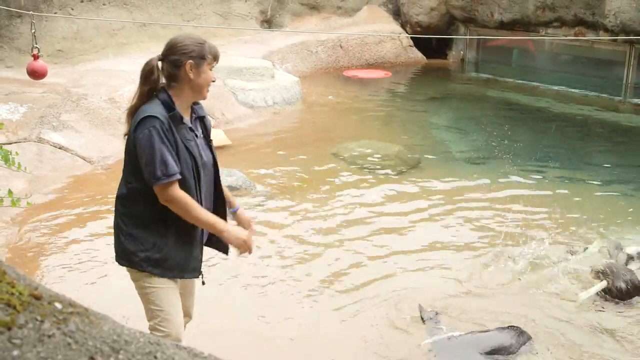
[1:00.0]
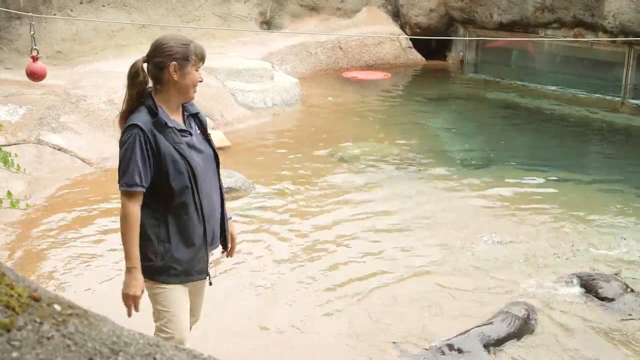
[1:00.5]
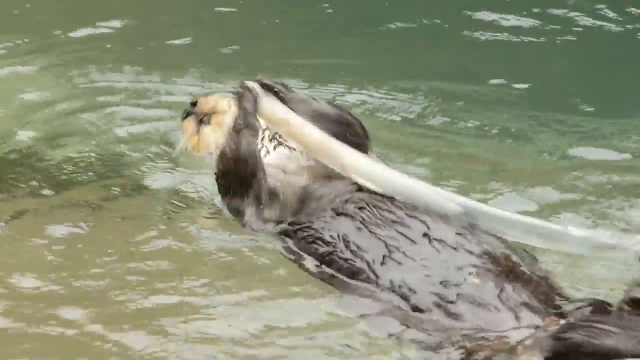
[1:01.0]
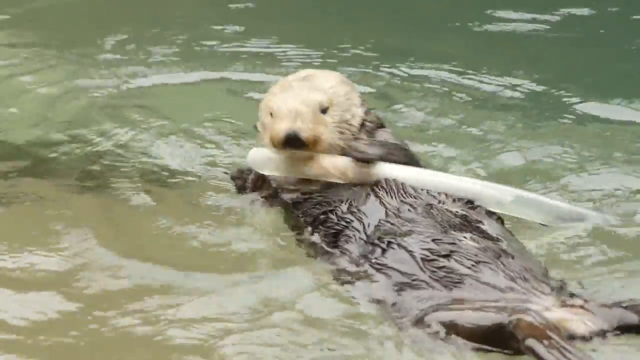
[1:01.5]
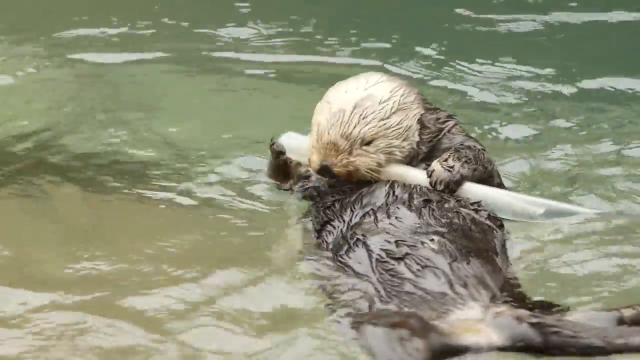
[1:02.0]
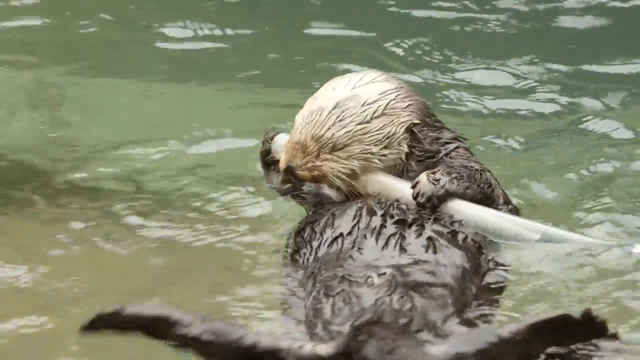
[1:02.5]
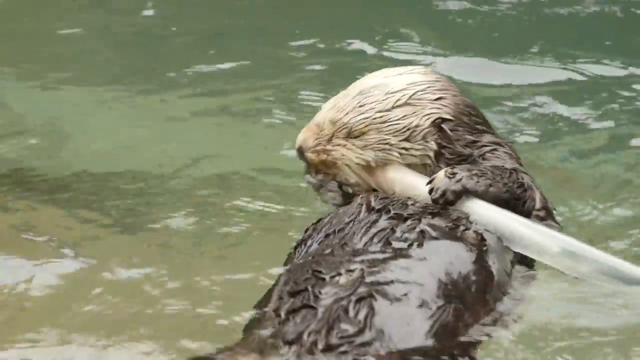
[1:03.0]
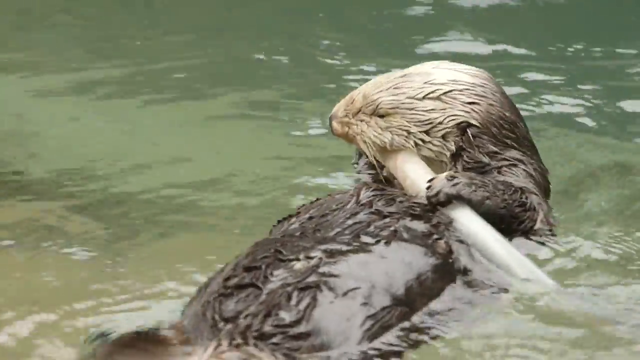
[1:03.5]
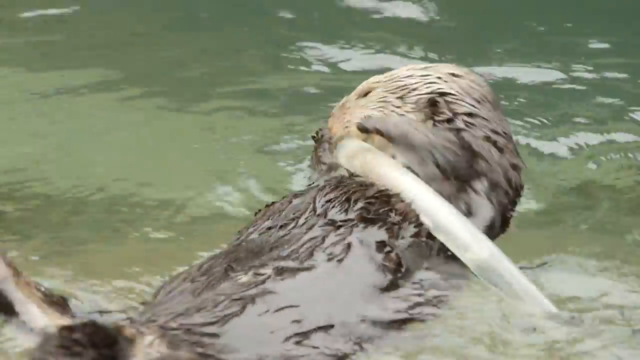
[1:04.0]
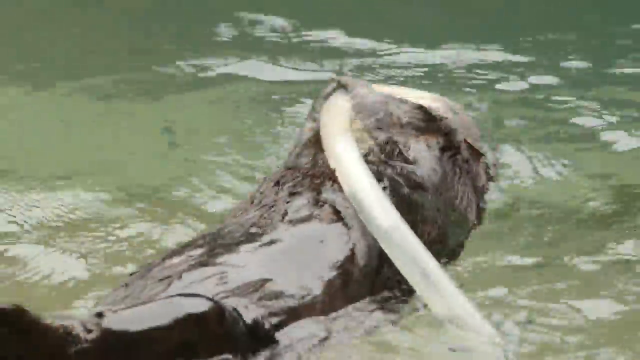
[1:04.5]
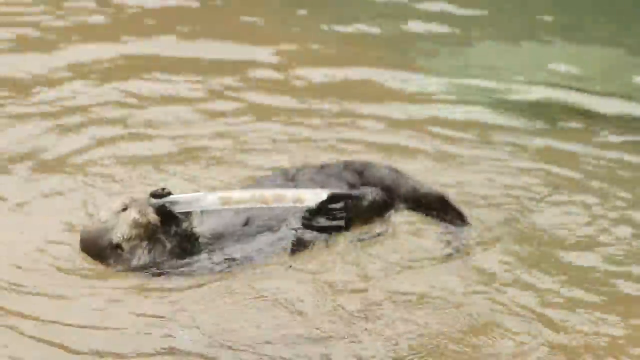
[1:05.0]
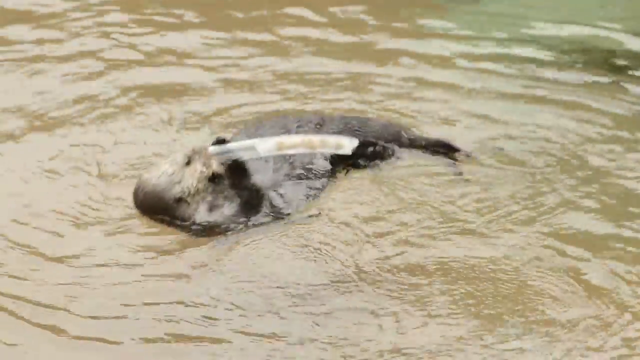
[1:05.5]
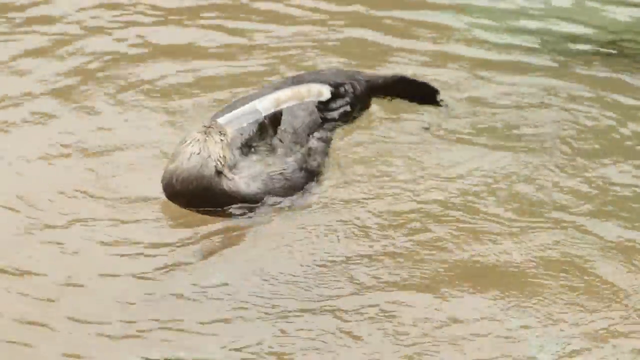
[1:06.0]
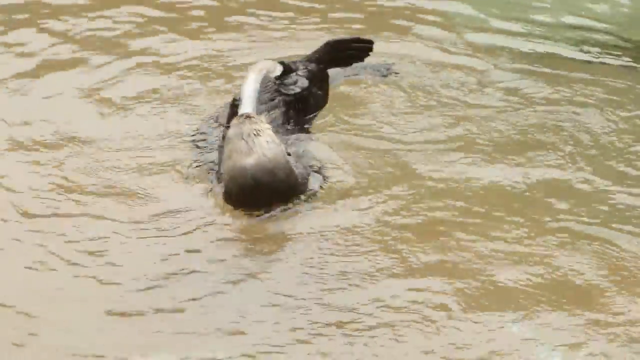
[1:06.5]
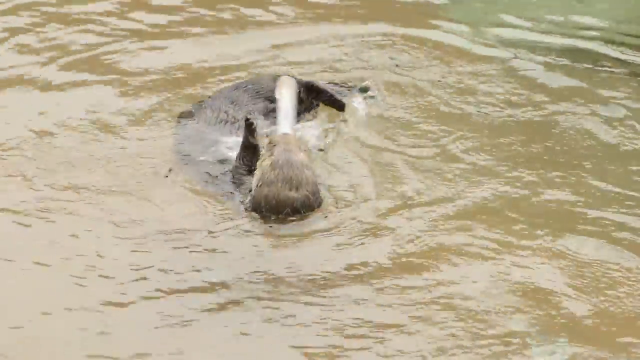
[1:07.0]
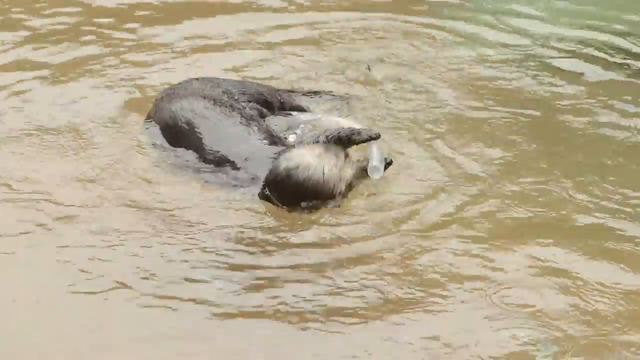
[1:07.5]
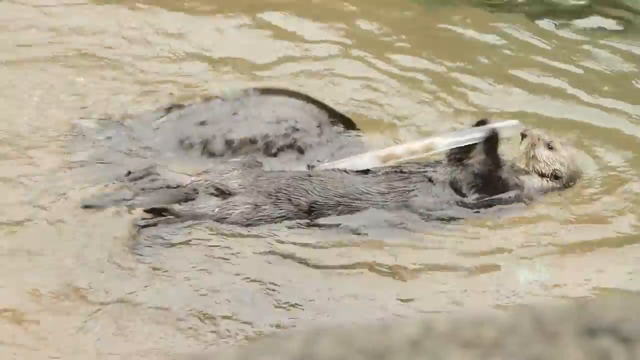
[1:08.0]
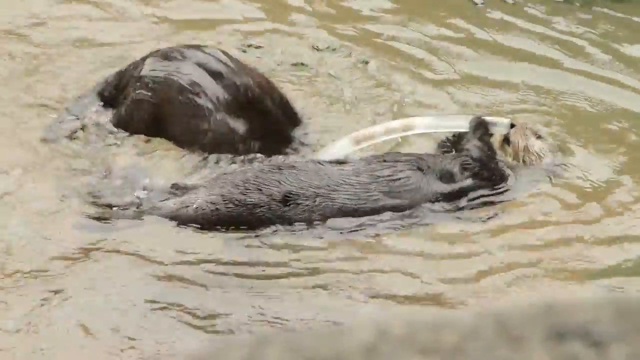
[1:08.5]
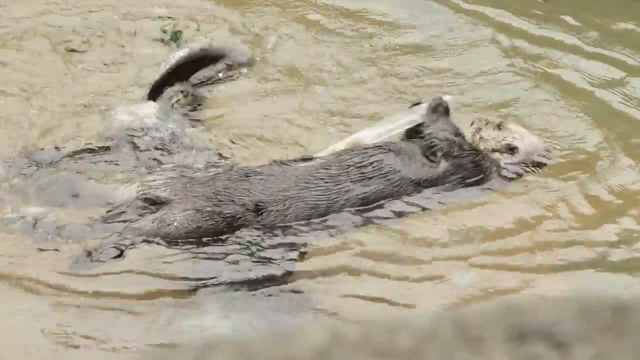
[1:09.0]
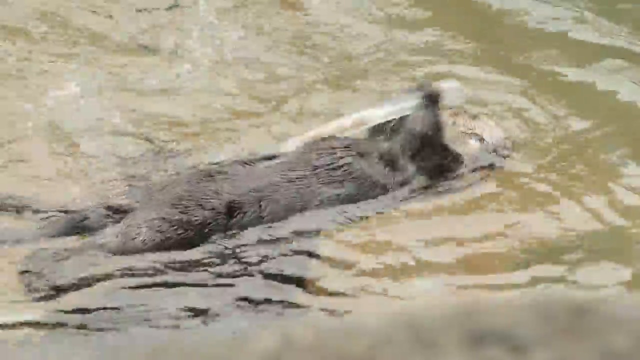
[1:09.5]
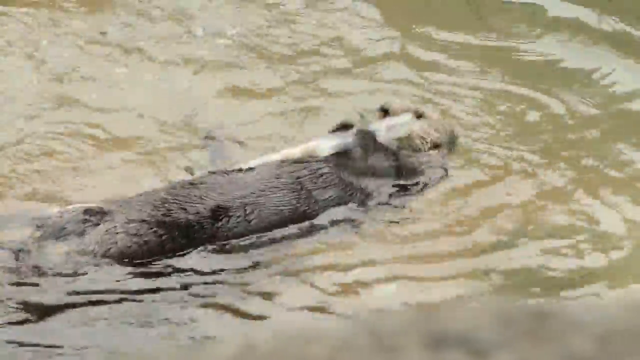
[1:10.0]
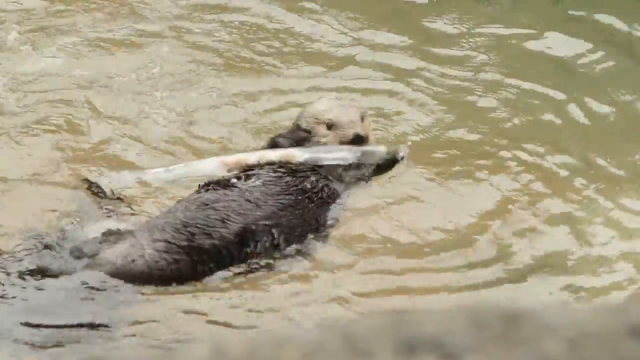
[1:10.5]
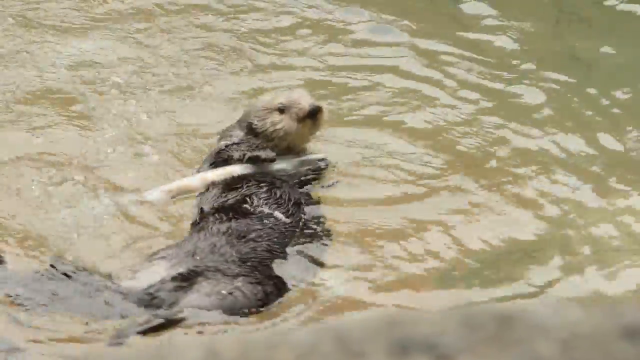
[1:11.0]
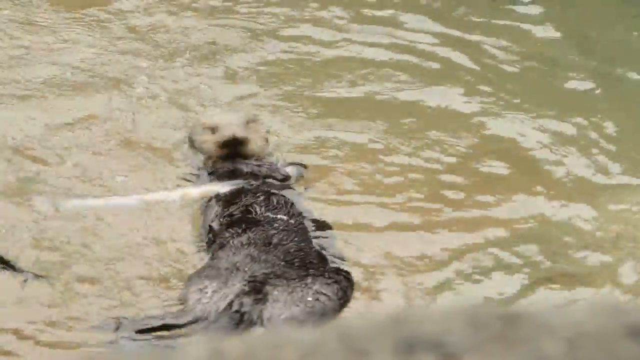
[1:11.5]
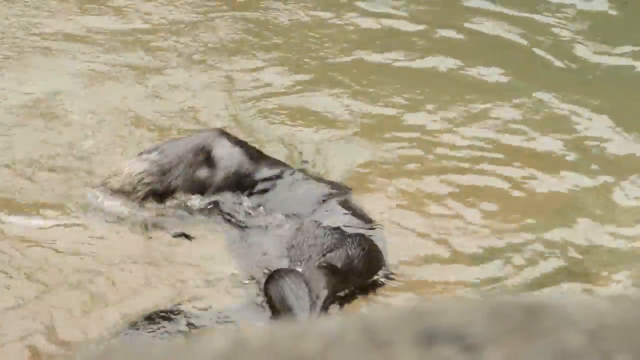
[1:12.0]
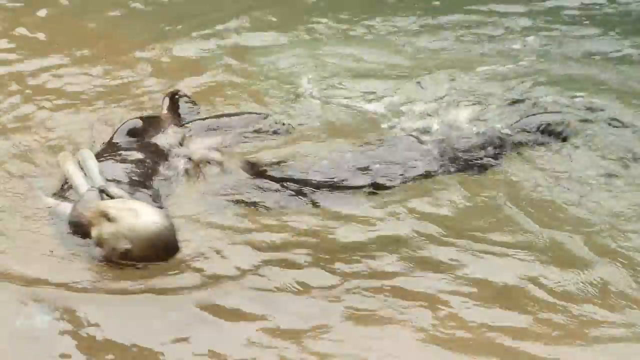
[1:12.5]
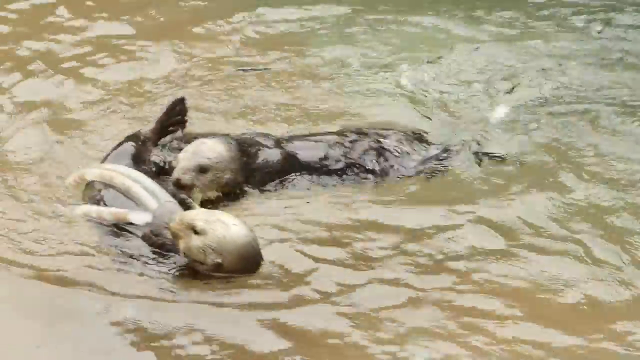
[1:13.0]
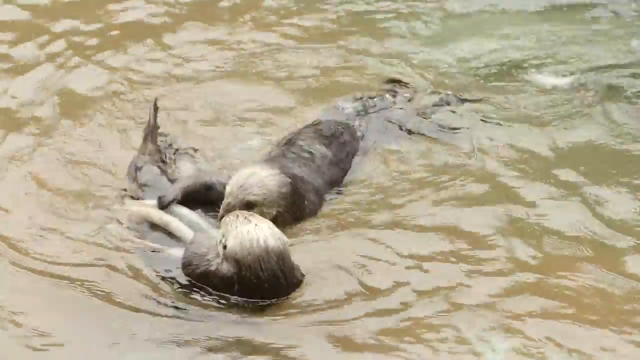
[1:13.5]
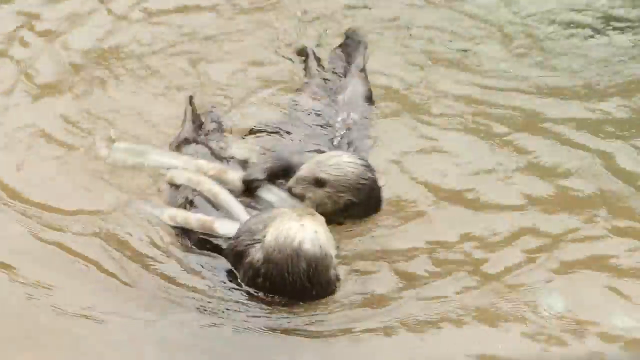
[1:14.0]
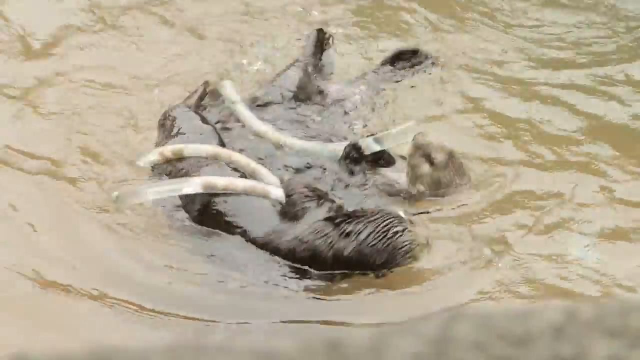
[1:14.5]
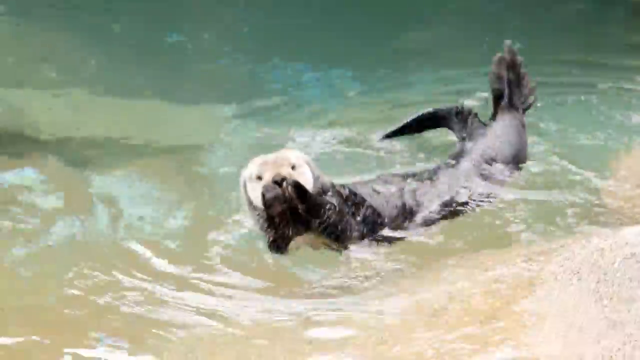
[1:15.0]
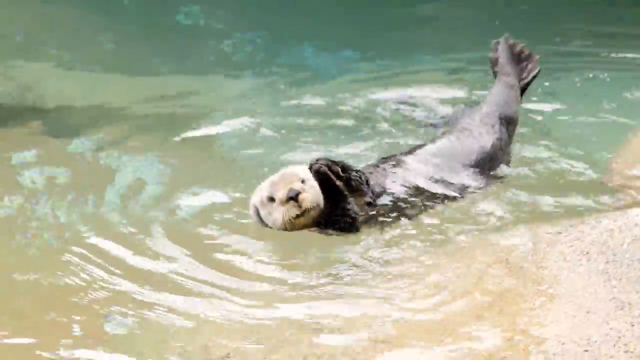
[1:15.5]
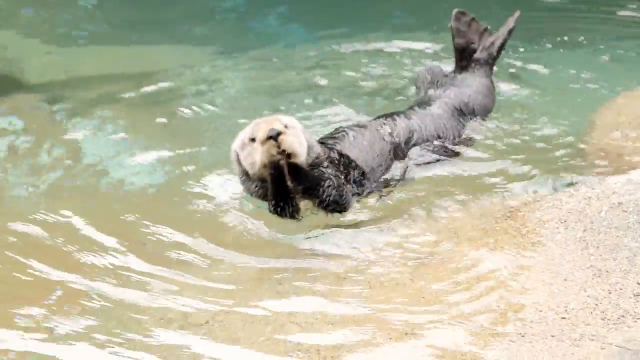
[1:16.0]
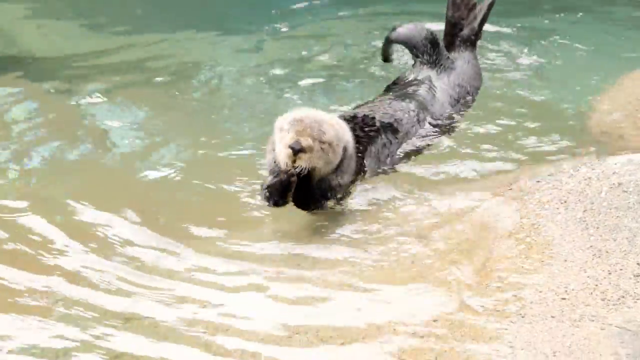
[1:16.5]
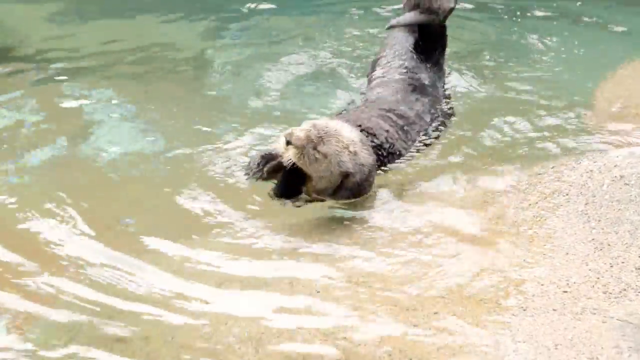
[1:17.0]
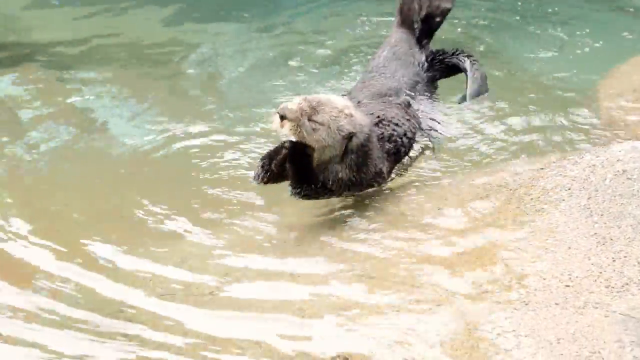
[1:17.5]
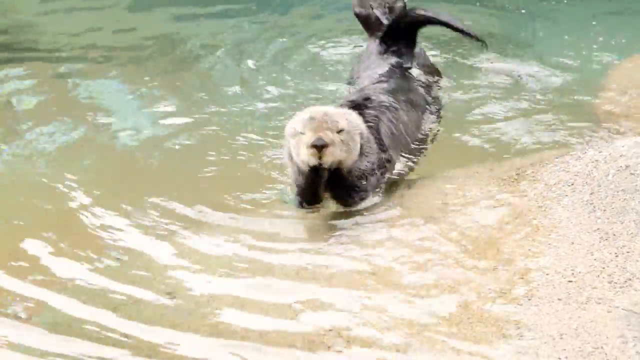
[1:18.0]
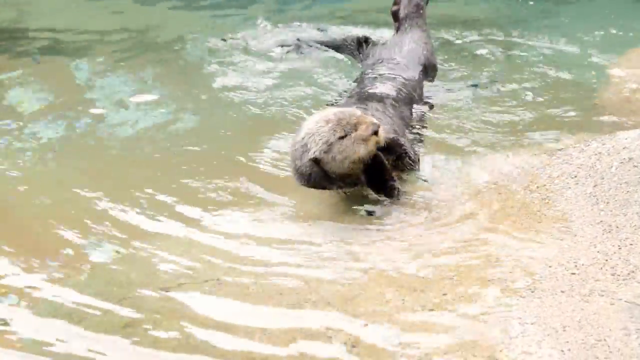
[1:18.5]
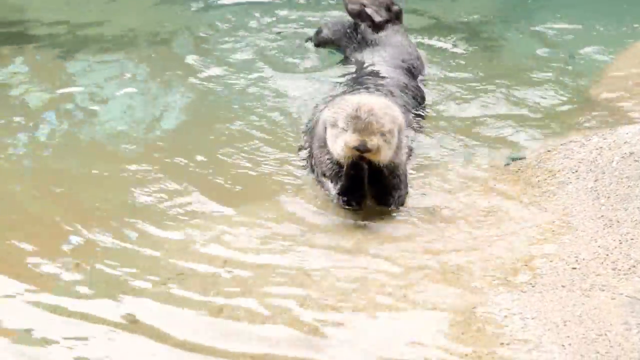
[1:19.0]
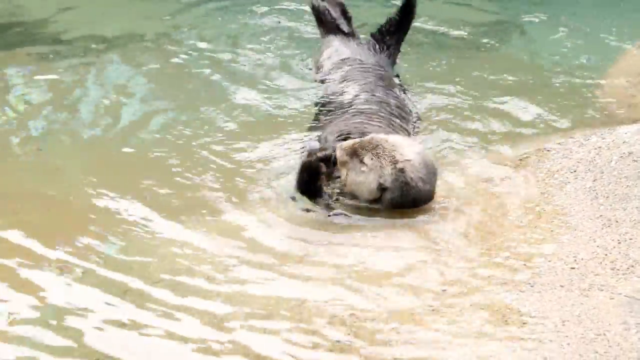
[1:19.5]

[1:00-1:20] The camera shows a wider area, the entire expanse of water, which looks like a pond with some separated sections. The camera also focuses on another part, where there seems to be another source of water coming from the other side. There is a wide red surface at the far end, and the banks are very rocky. Quite a number of otters are in the water, playing, turning around and turning the water brown, while the woman concentrates on them. An otter struggles to eat something that looks like a pipe, seemingly playing with it and eating it, and the otters look like they are fighting over it.